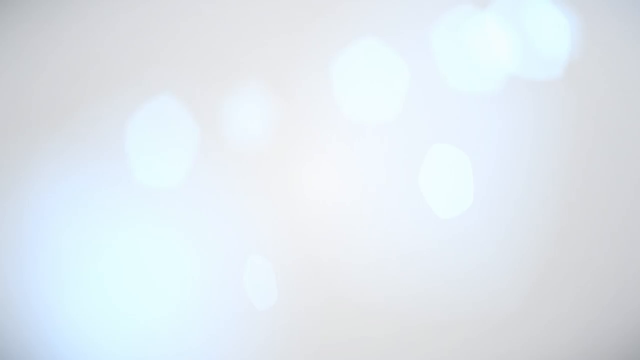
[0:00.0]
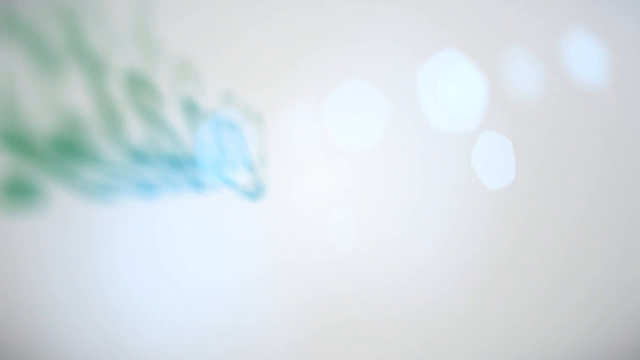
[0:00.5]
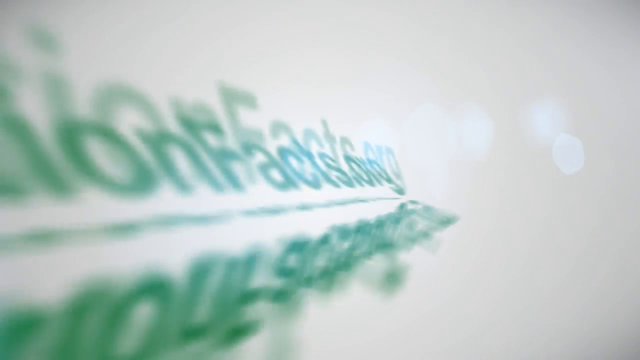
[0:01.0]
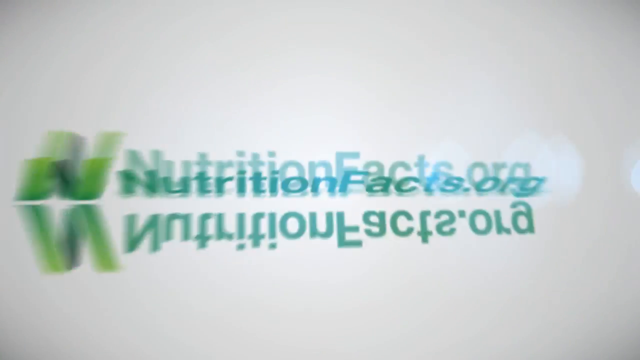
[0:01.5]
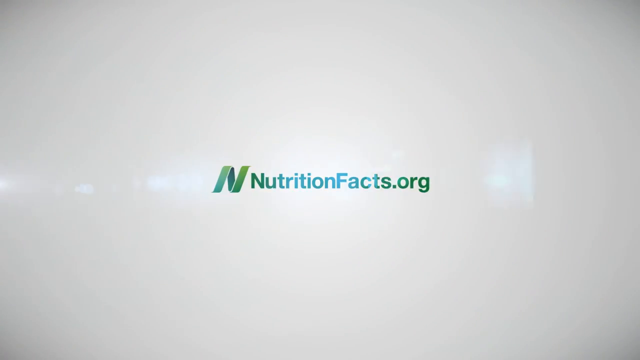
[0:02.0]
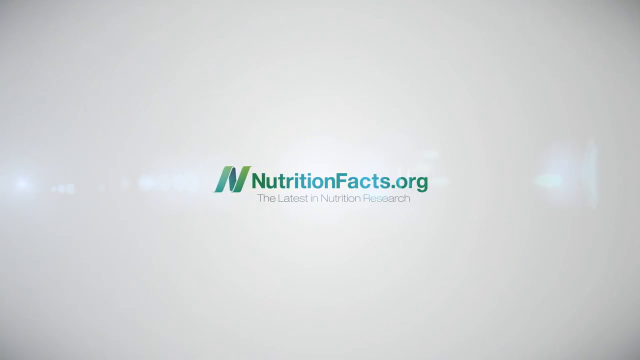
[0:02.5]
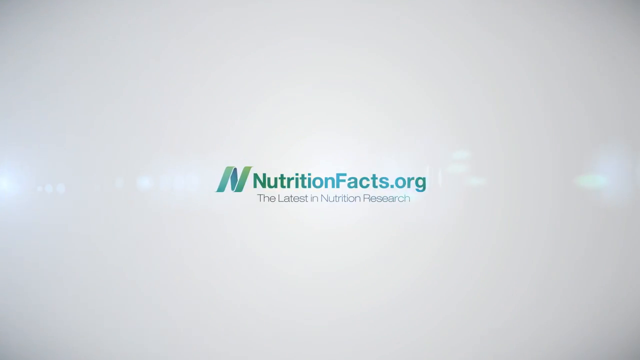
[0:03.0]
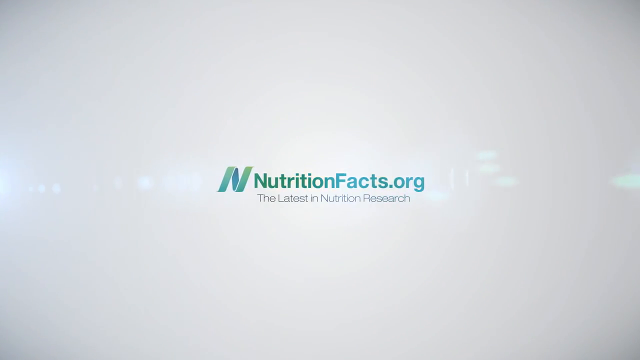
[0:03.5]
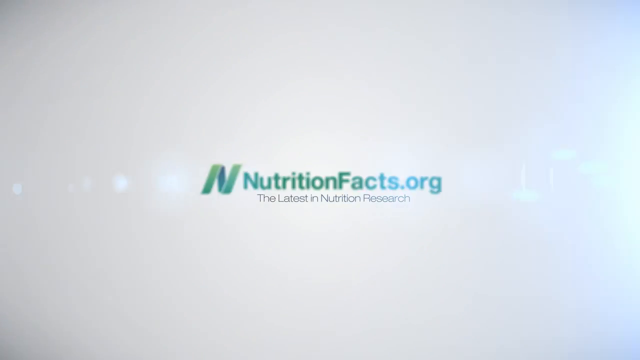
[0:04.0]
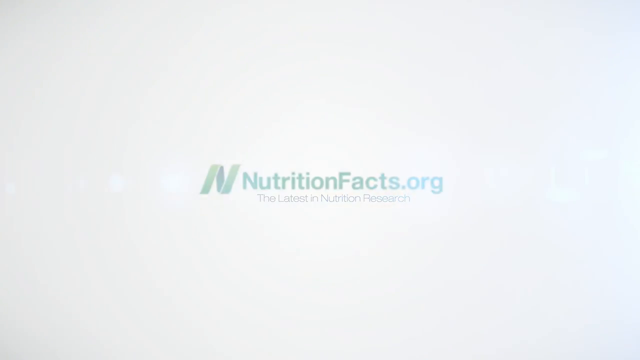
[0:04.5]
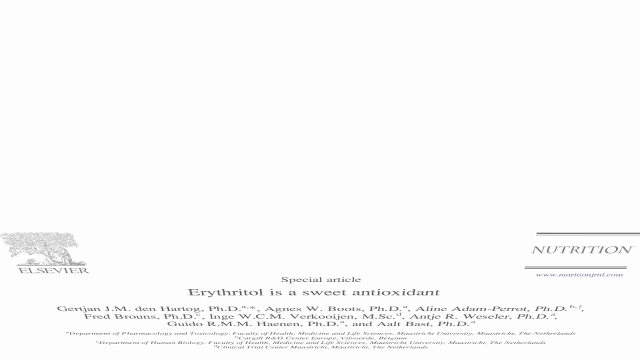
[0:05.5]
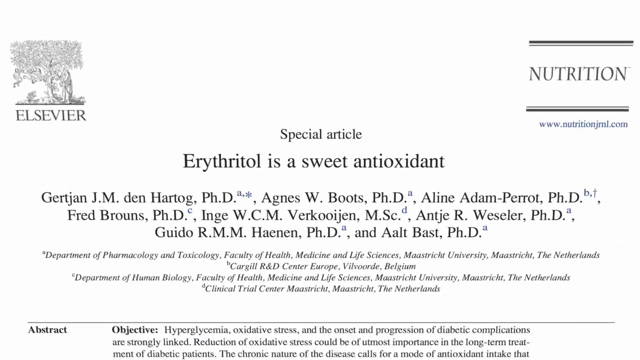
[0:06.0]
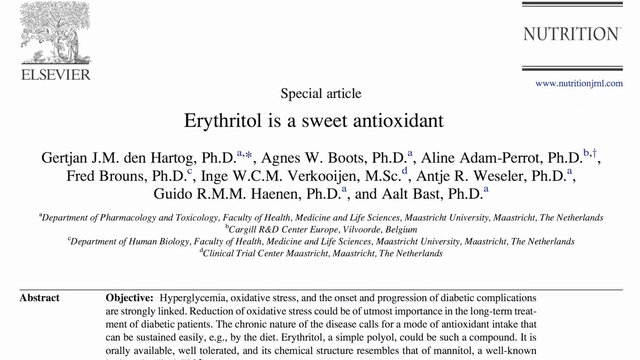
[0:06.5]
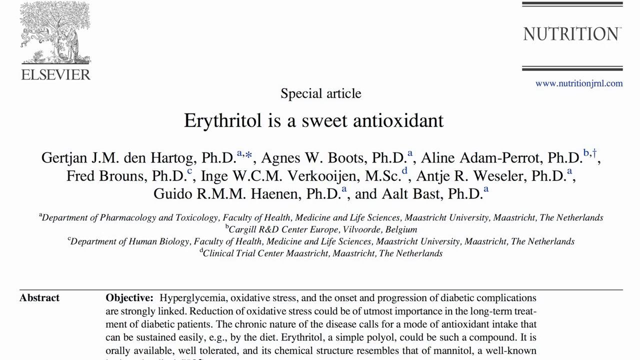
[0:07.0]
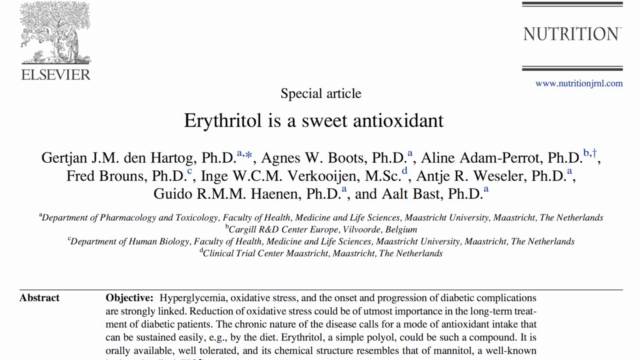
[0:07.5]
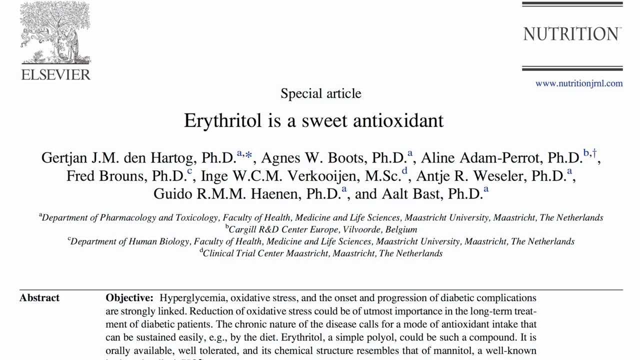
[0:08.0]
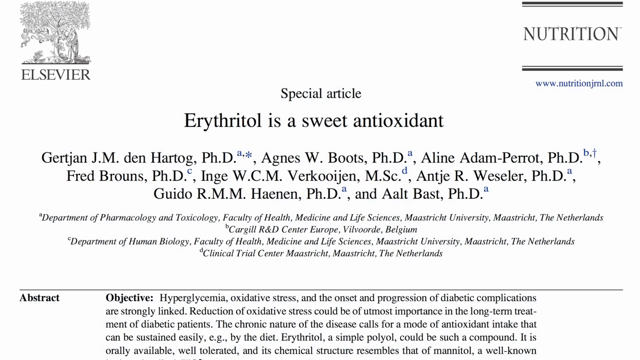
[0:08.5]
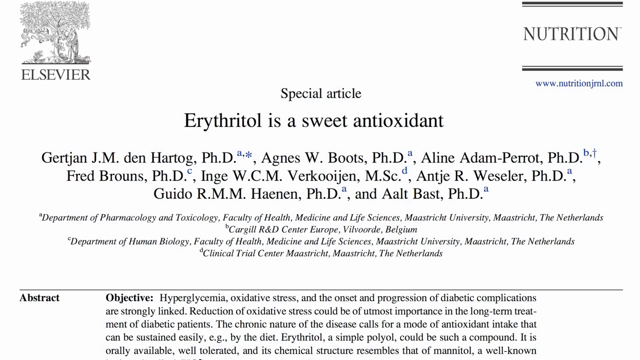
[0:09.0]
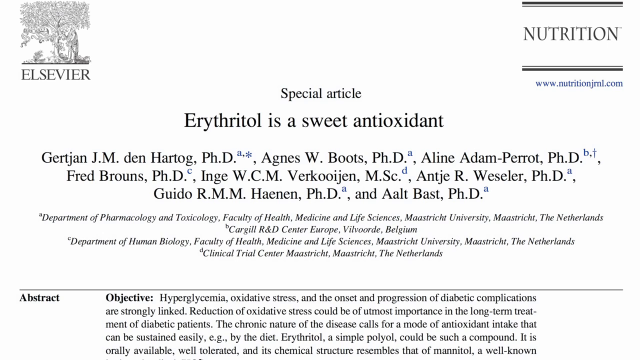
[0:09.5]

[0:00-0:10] The video opens on a white background with some bright white ovals. Animated text appears that seems to credit the video to nutritionfacts.org, "the latest in nutrition research." Next comes the heading of a scholarly article stating that erythritol (spelled E-R-Y-T-H-R-I-T-O-L) is a sweet antioxidant. About 10 authors are listed on the heavily footnoted article, which was published by Elsevier in the nutrition journal ML.com. The heading stays on screen for some time, and then the scene changes back to the white background from the opening.